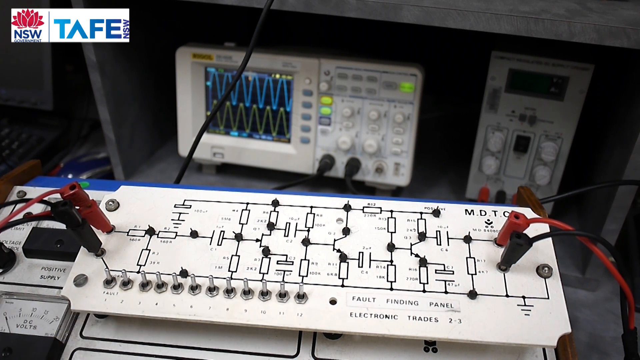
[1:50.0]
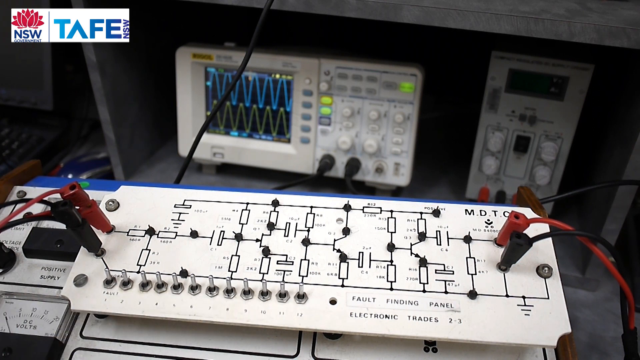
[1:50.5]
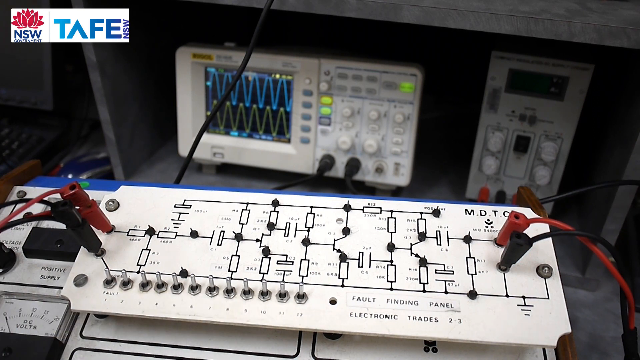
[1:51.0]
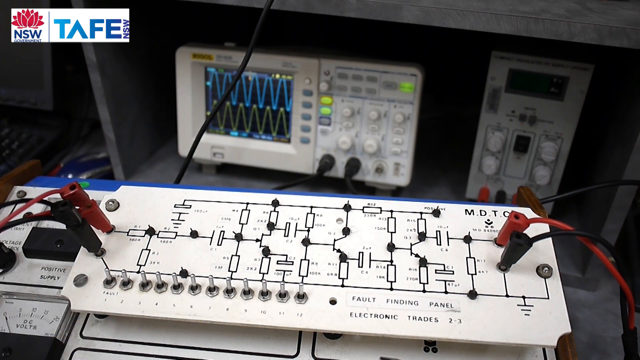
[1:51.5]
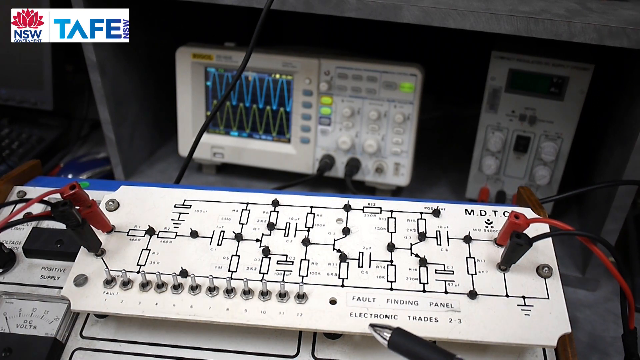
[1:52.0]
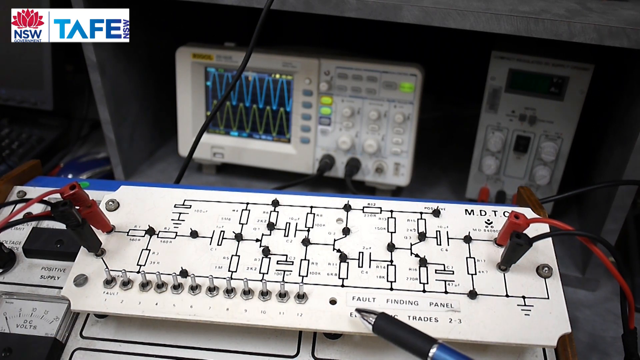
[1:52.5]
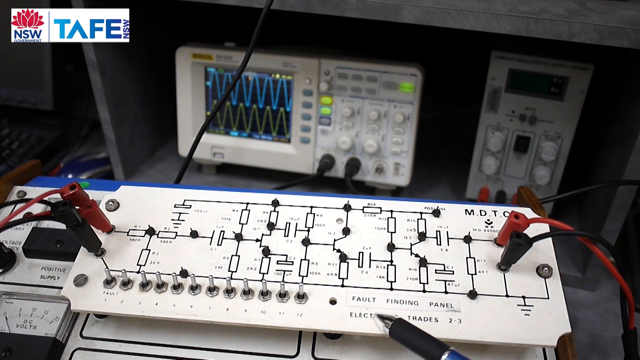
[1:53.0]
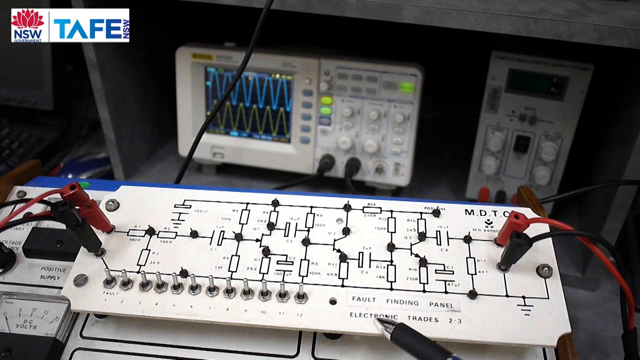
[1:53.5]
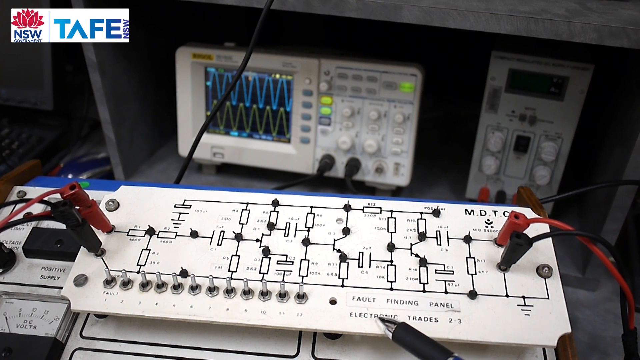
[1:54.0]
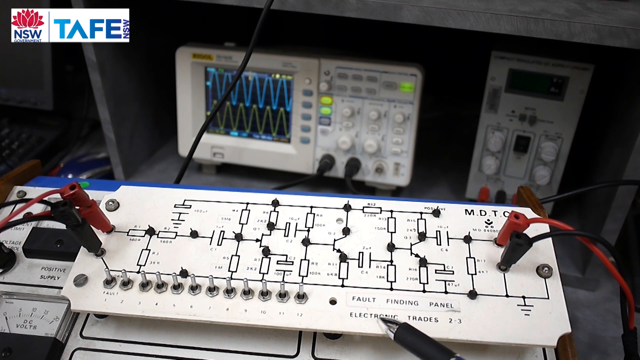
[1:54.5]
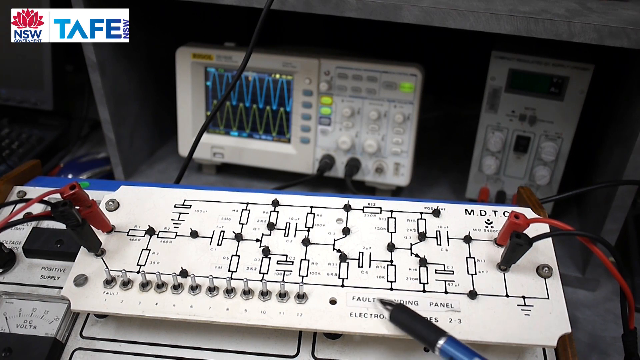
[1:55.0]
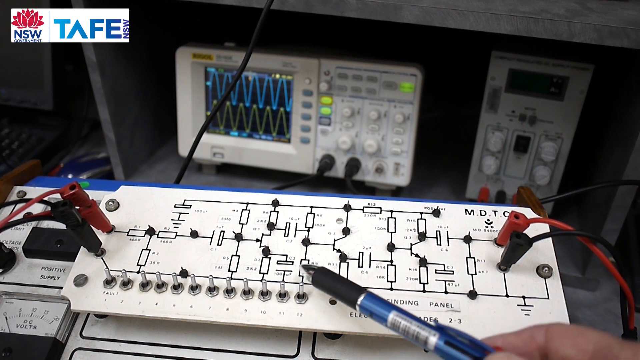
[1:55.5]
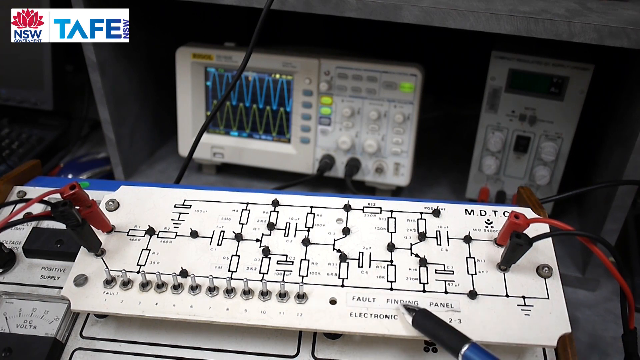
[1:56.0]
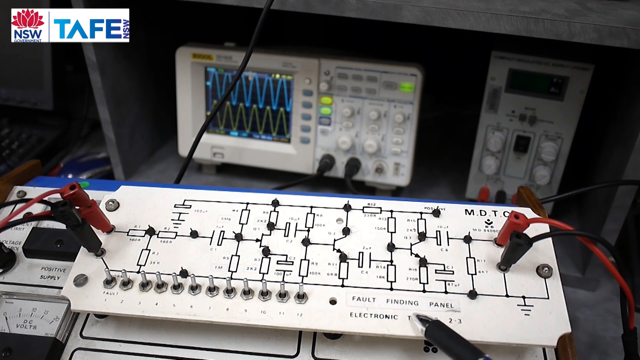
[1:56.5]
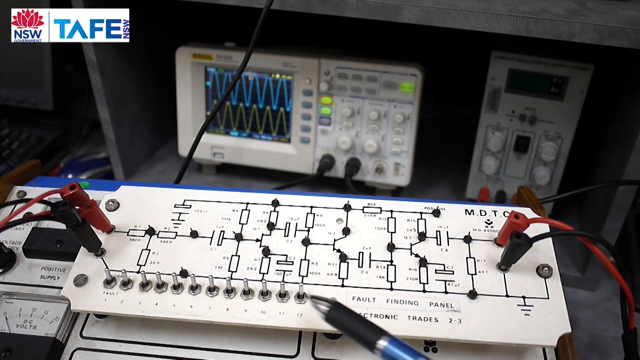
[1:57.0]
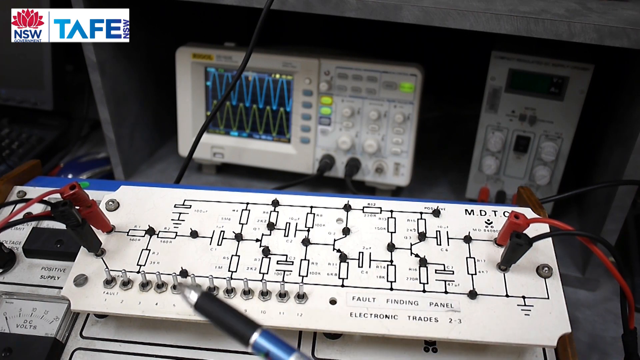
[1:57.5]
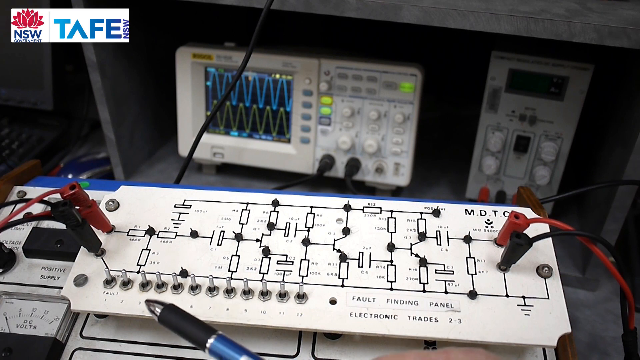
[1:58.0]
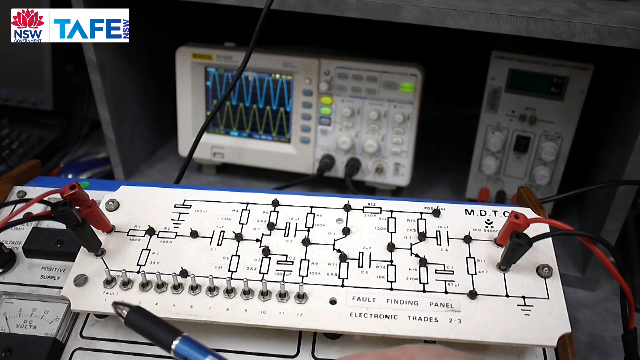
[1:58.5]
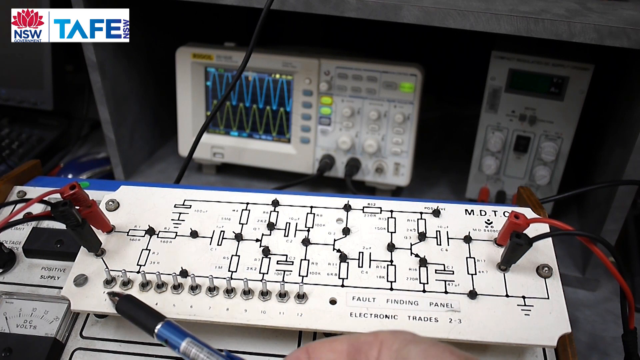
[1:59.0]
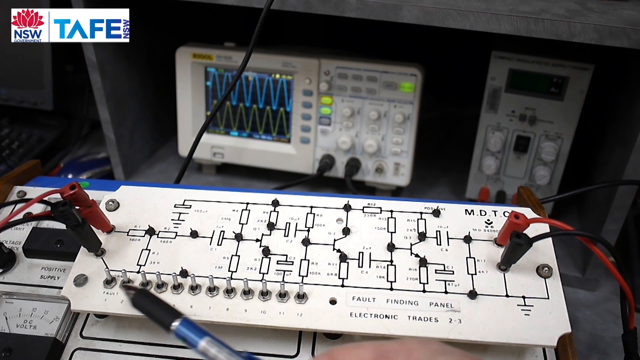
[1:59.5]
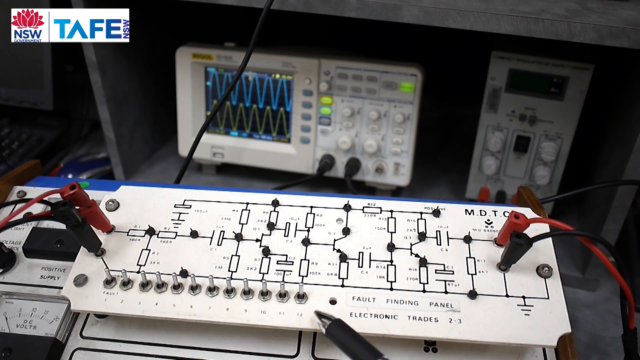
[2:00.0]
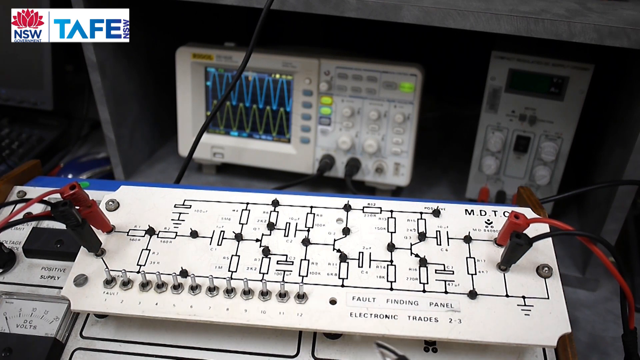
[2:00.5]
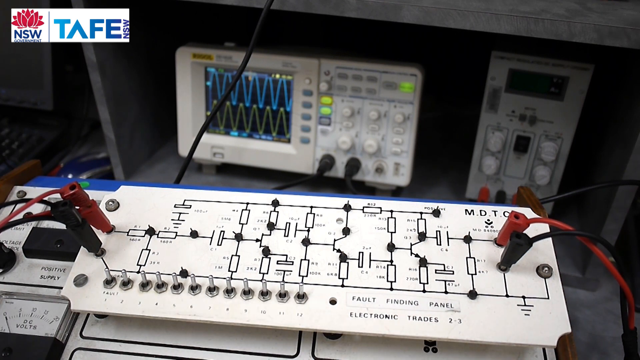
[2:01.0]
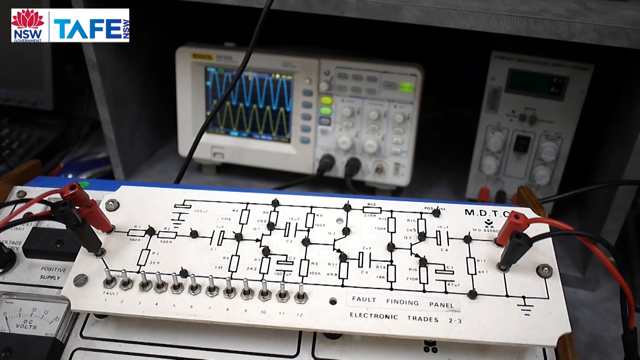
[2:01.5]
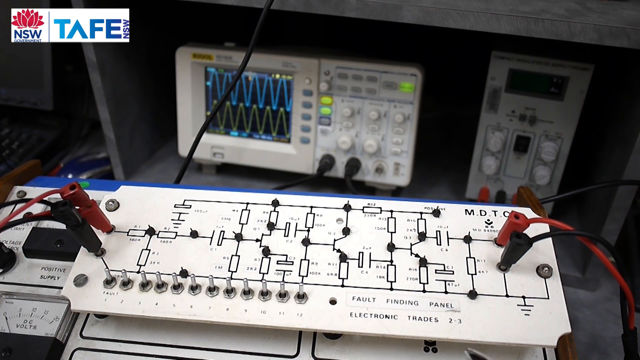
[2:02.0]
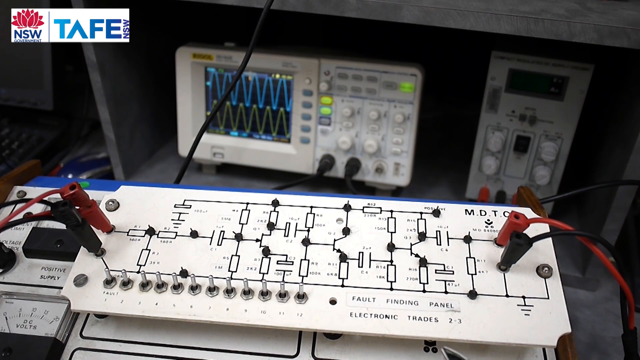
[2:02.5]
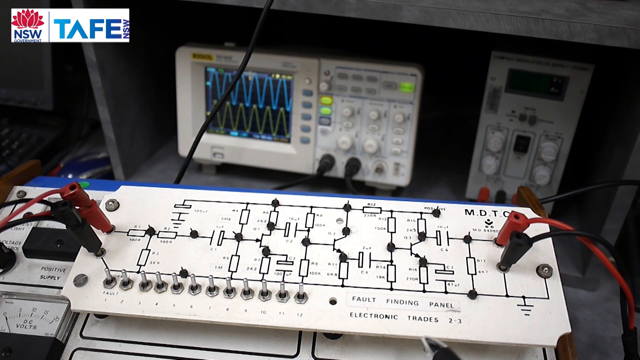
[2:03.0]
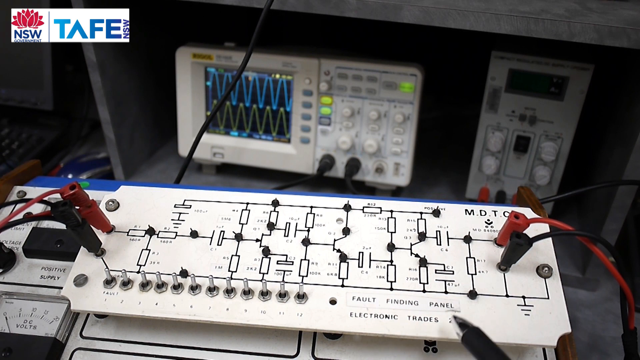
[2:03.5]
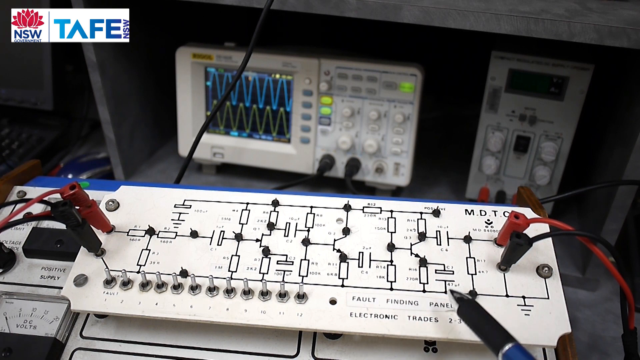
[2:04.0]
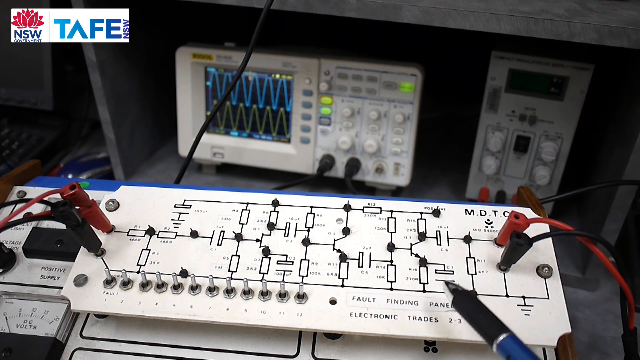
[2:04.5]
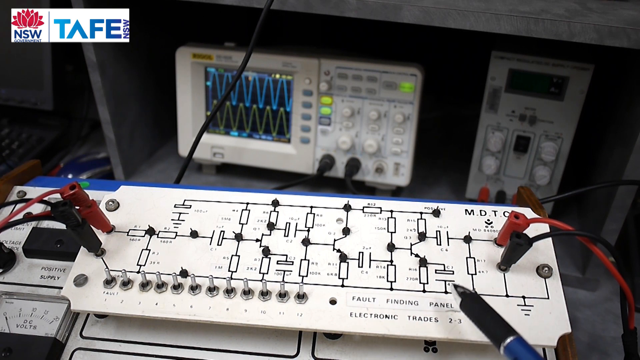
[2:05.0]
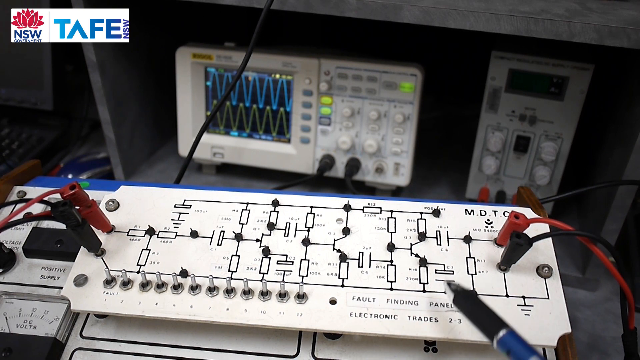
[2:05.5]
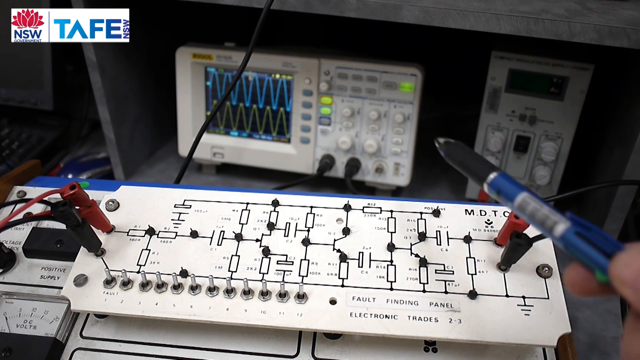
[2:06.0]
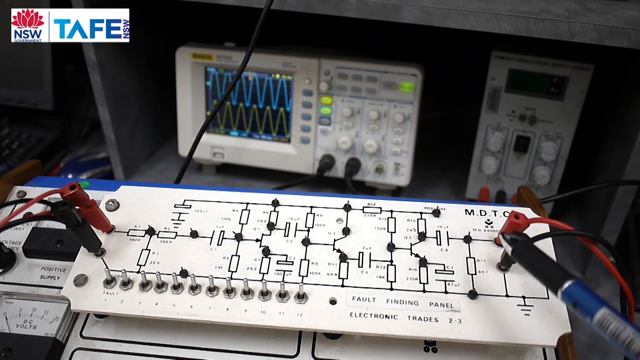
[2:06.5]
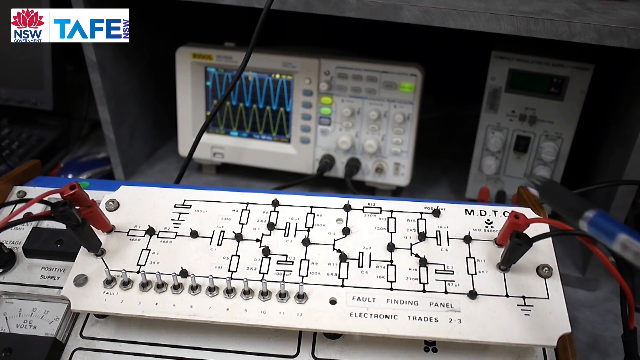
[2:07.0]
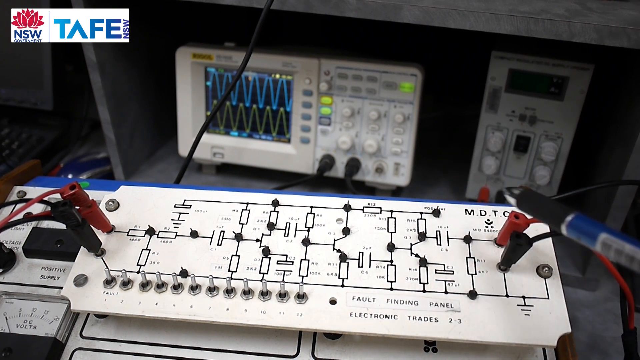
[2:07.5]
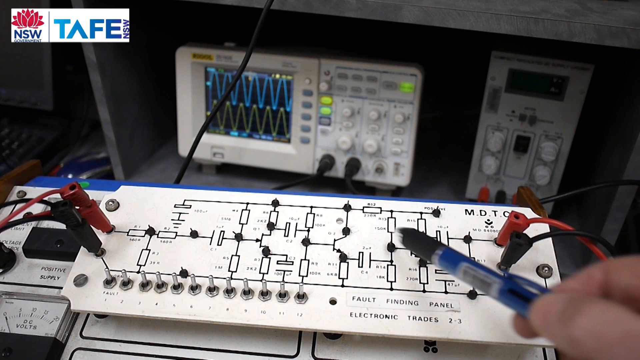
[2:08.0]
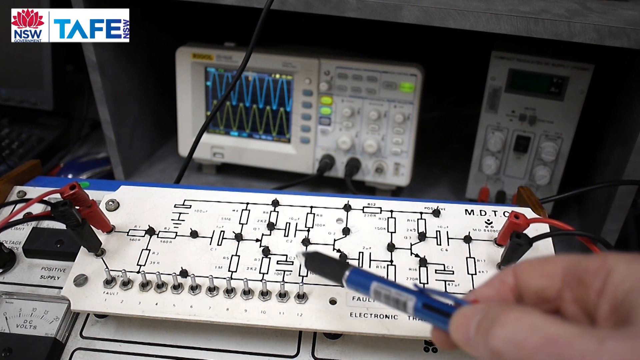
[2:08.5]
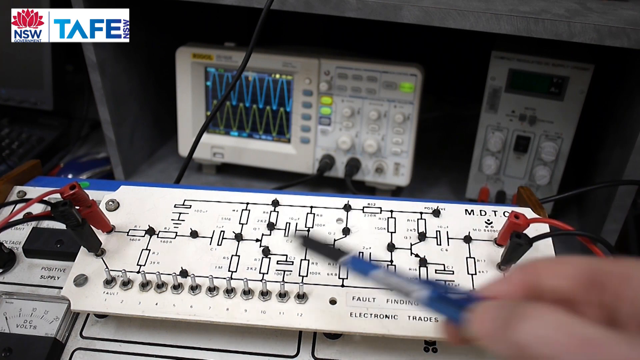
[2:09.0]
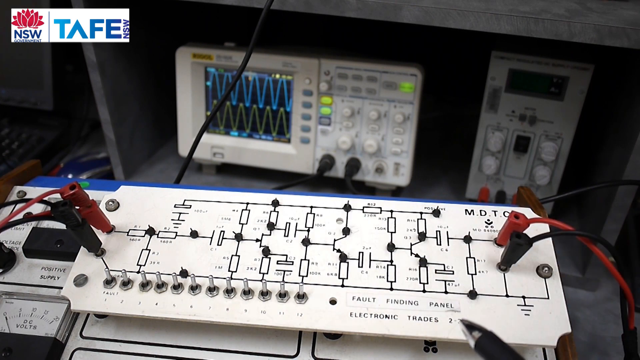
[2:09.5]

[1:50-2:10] The flat panel has several small white rectangular boxes. Starting on the left there is one rectangular box, then almost a T-shape, then two rectangular boxes with a black dot in the center. Farther over is another connecting black dot, then two small triangles, one at the top and one at the bottom, and a black dot in the center with an arrow going through it. Continuing to the right, the layout gets more complicated, with more black dots and more black lines connecting the dots to small triangles. It appears to be some kind of electronic board or panel that controls things. At the back is a gray wooden area that looks like a shelf or box area for the next panel. A white box is stored underneath; this box is horizontal, and then there is an upright vertical box. A red wire and a black wire, and perhaps another red wire, are plugged into inputs on the vertical standing box.